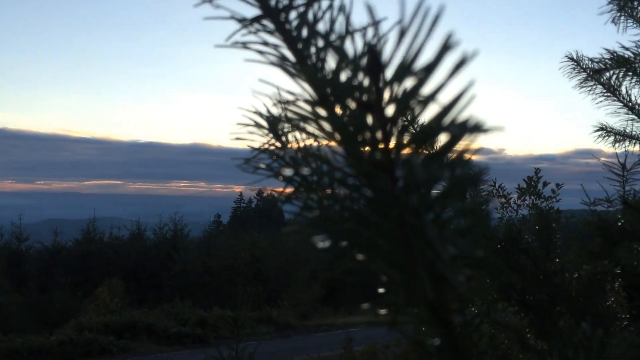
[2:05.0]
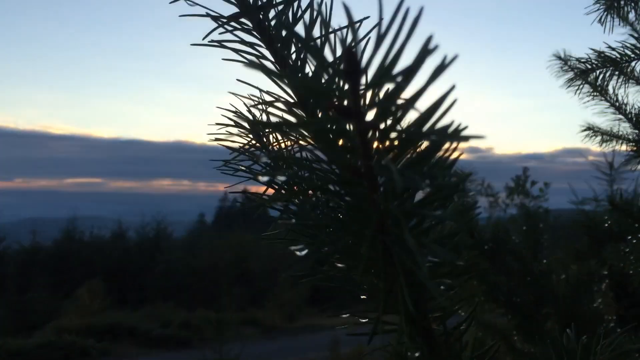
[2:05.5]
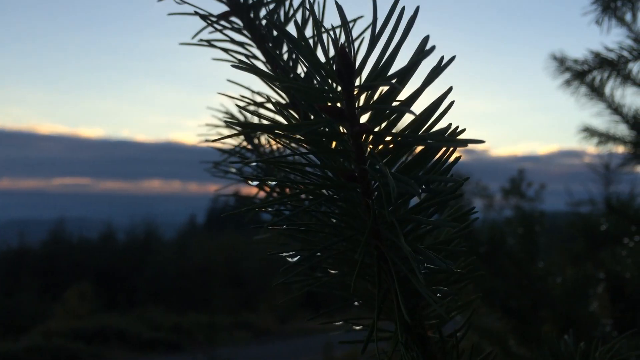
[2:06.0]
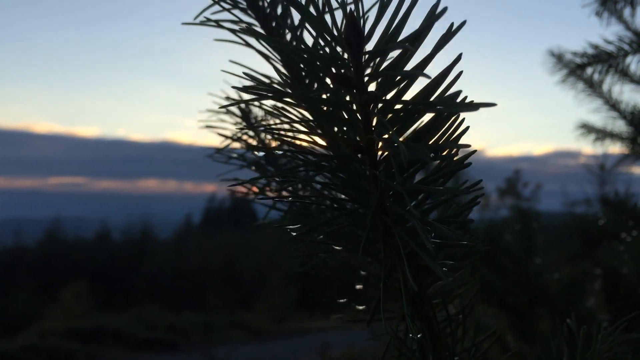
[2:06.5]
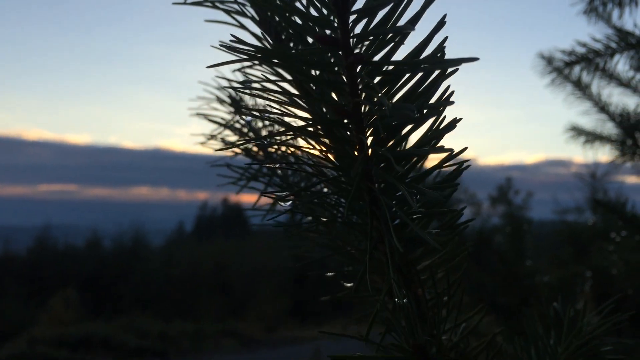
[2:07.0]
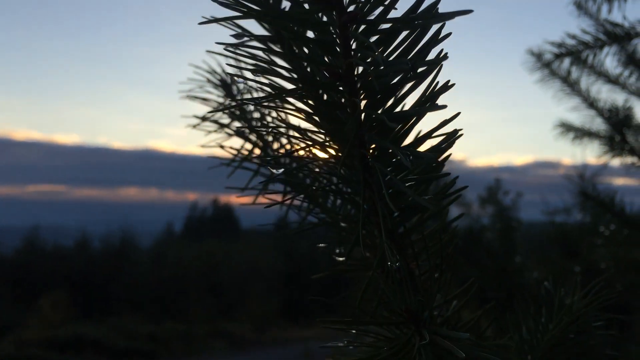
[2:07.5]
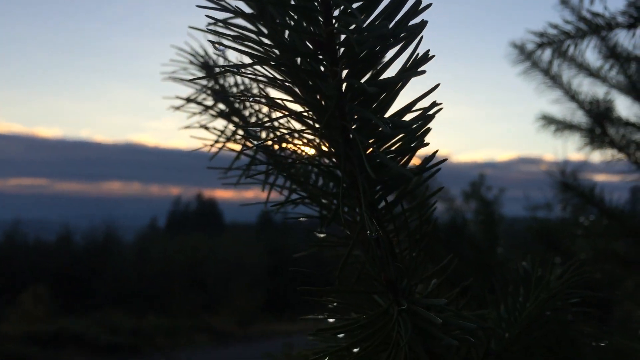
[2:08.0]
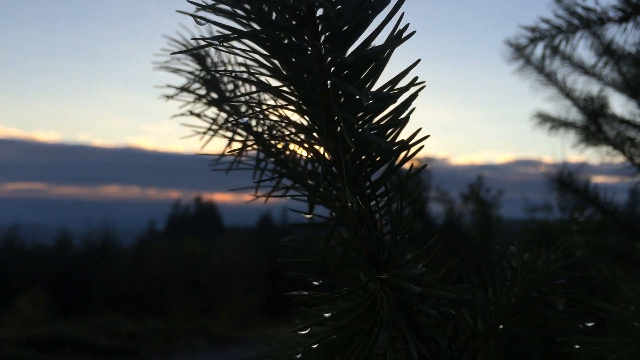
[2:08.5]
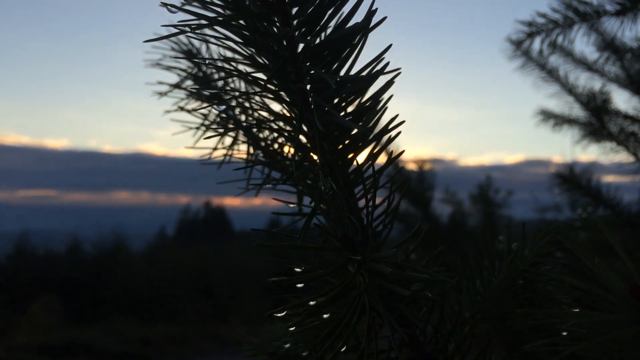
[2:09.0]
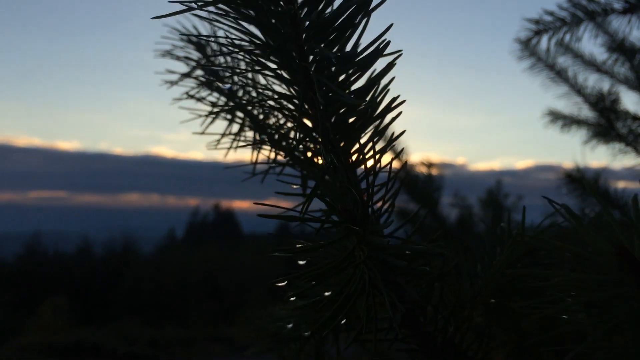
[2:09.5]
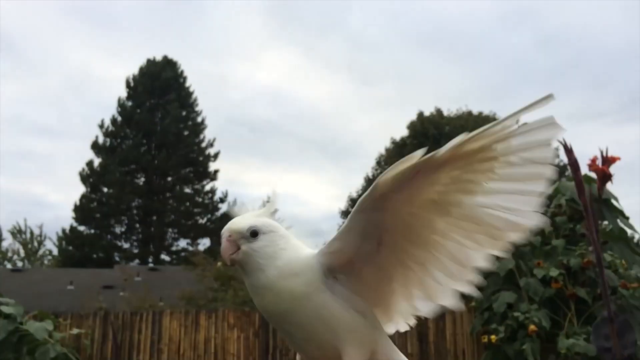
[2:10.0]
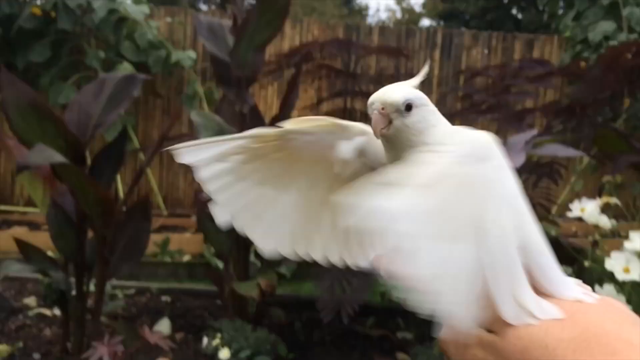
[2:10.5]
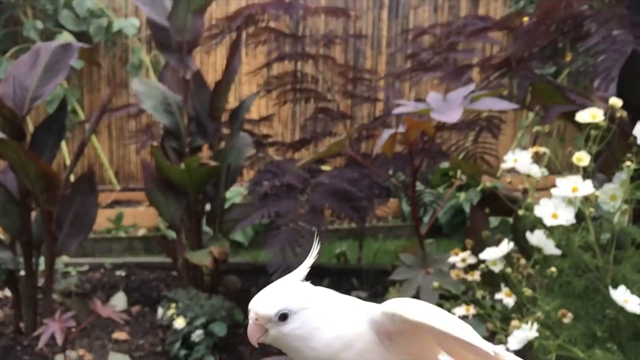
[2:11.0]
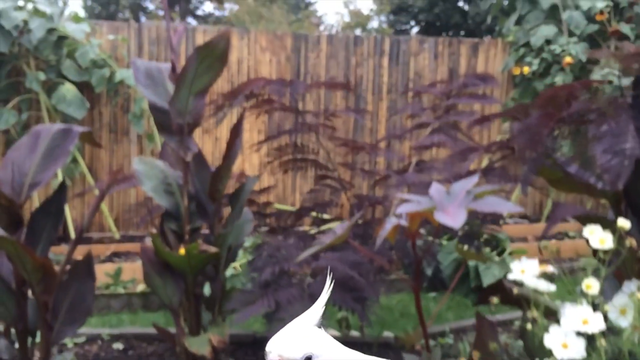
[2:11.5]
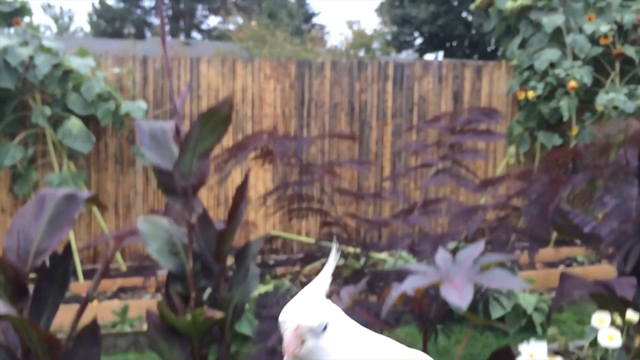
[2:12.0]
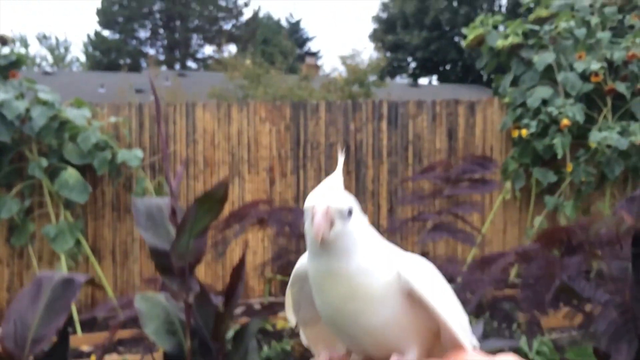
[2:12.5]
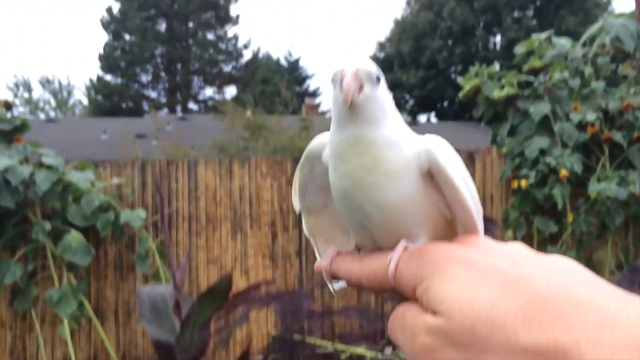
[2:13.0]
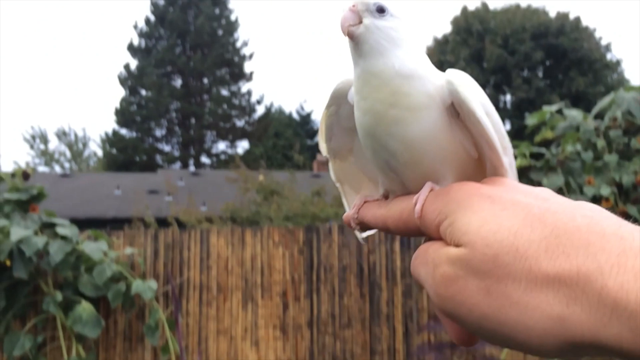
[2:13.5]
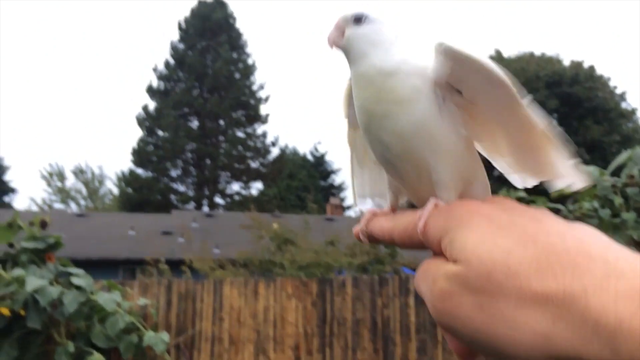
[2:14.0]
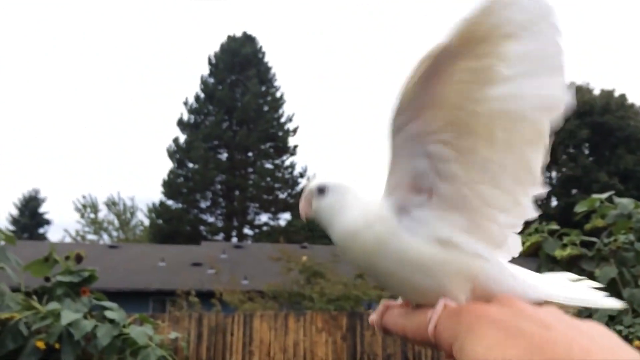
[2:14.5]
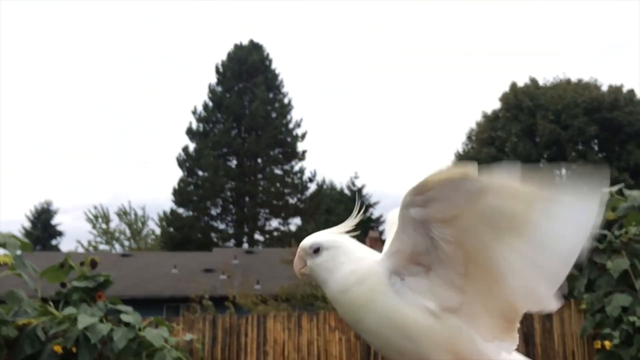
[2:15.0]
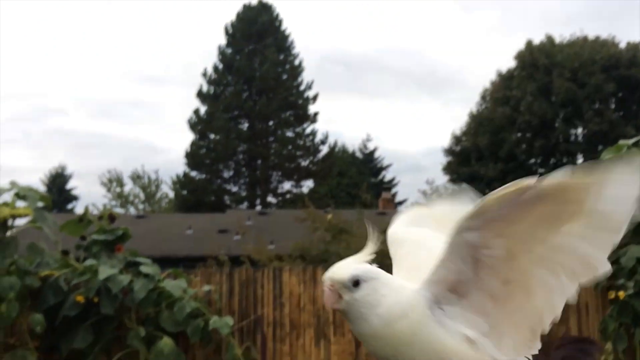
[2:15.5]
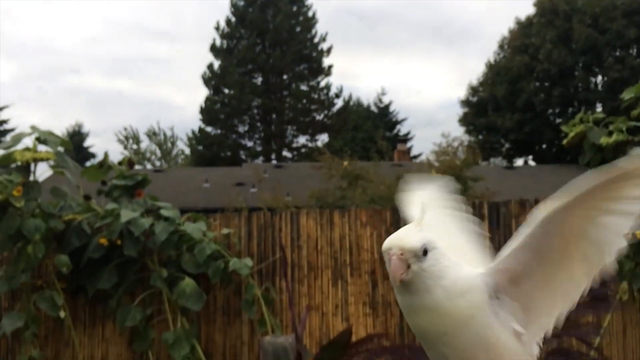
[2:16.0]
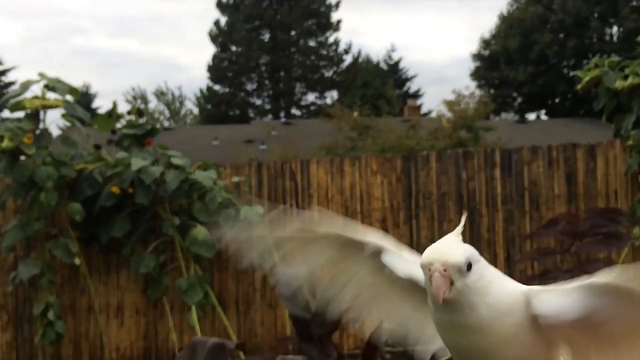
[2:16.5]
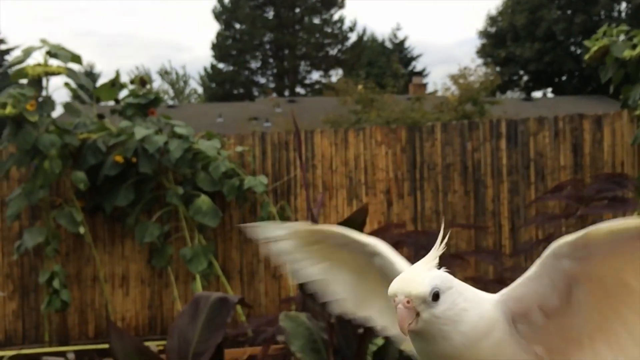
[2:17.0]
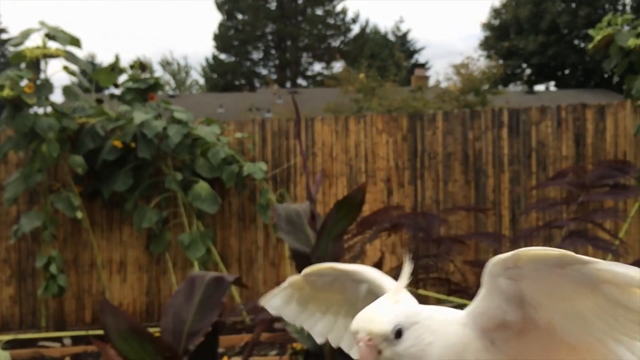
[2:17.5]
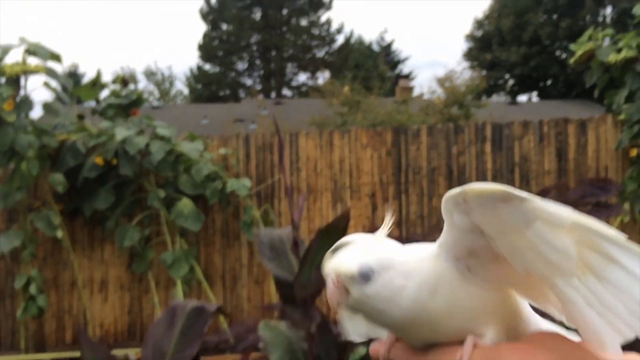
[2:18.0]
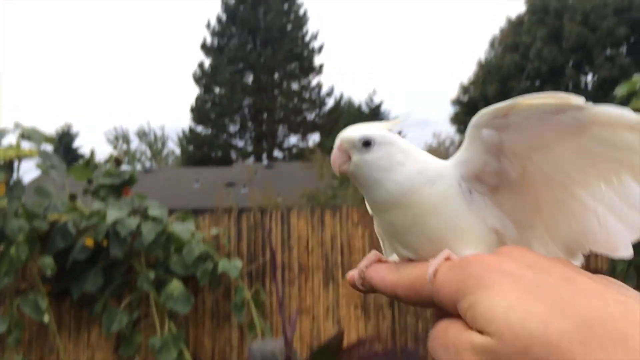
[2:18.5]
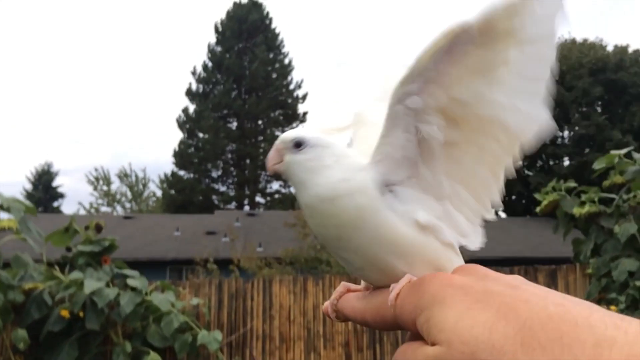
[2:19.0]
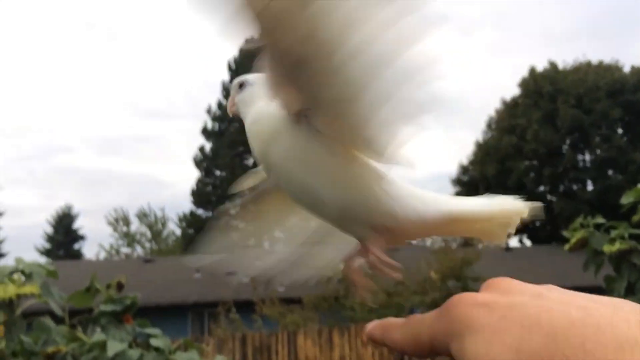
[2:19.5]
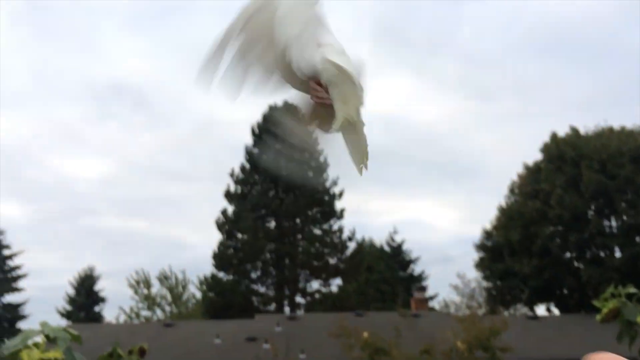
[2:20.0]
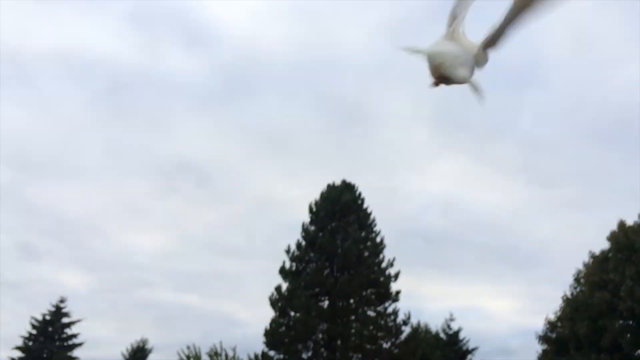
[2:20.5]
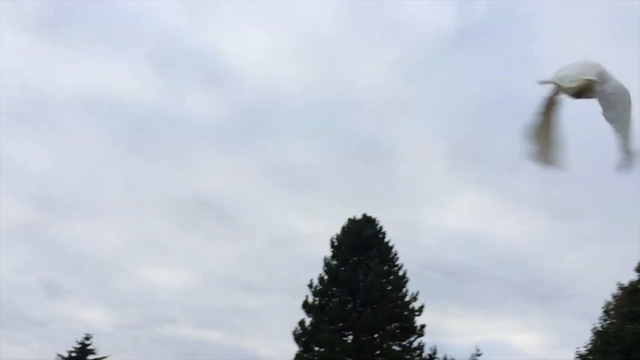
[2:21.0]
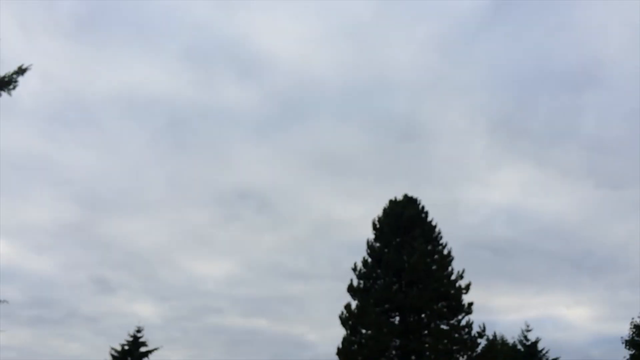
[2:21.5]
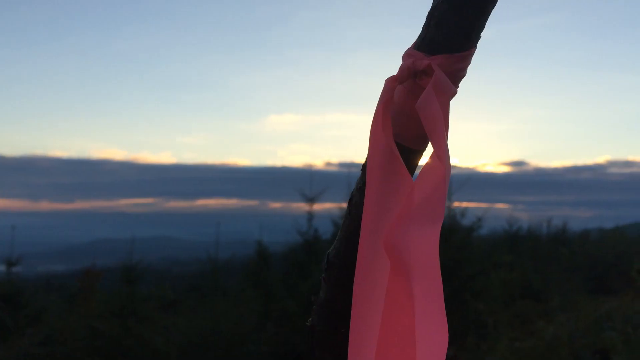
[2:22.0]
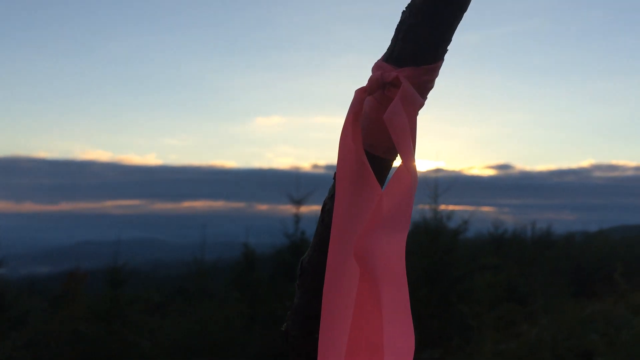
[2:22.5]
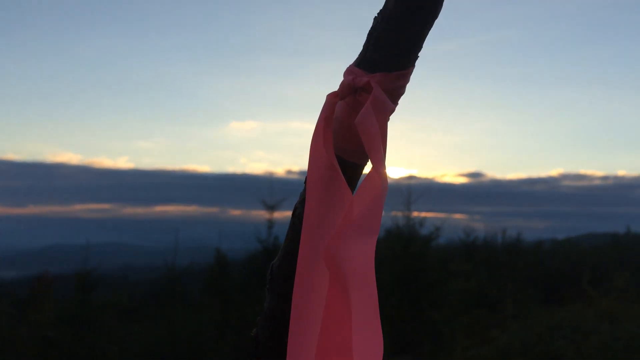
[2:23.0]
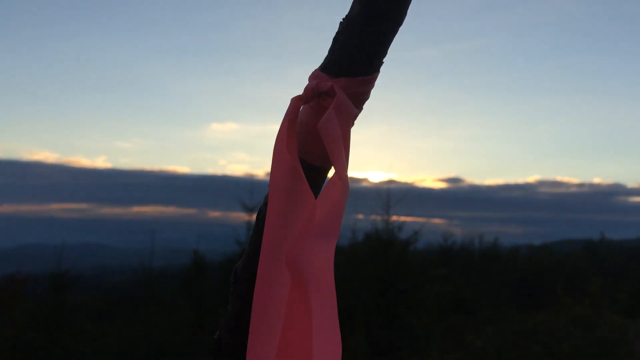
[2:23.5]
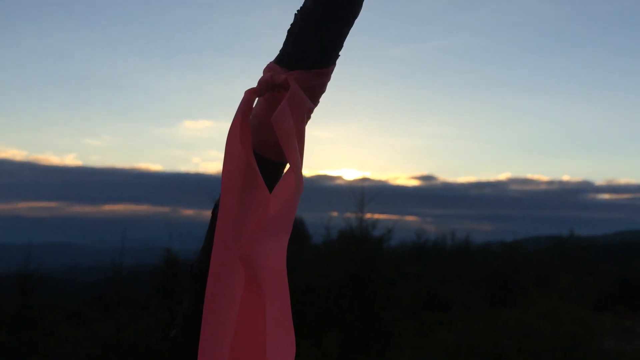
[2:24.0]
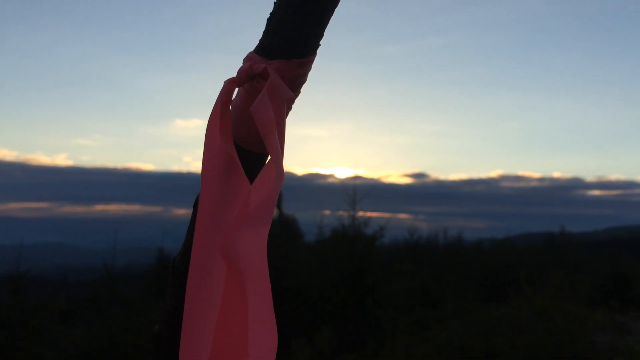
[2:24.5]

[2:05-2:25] The shot of the dewy bush continues as the camera scrolls down. An edit cuts to a bird on a man's finger, on a white hand; it looks like a white parakeet, and it flaps its wings several times. The man moves his hand up and down, then moves it back up and lets the bird fly off. The video cuts to a pink ribbon around a branch, then quickly to the dewy tree, and then the bird comes on screen again. The camera follows the bird up and down as it opens its wings and flaps while the man moves his hand up and down. Behind them is sort of a brown gate with green foliage over the top of it. The bird flies off to the top right of the image. The video cuts to the pink cloth wrapped around a branch, then back to the bird, with some purple foliage right behind it and tall trees behind that stretching up toward the sky. In the last scene, the branch with the pink ribbon has sort of a mountain backdrop.